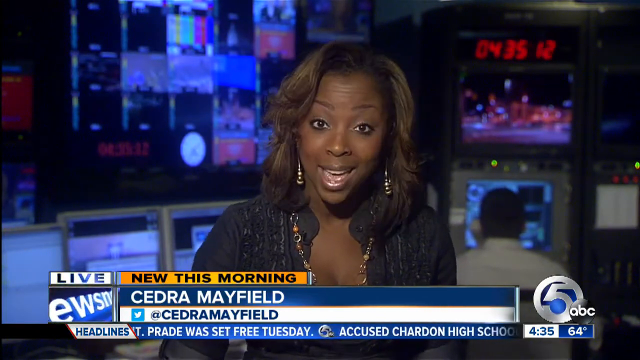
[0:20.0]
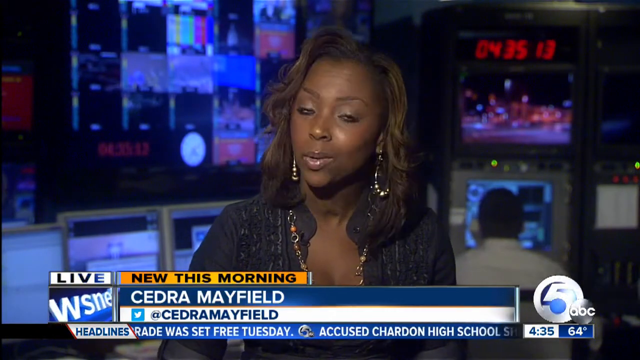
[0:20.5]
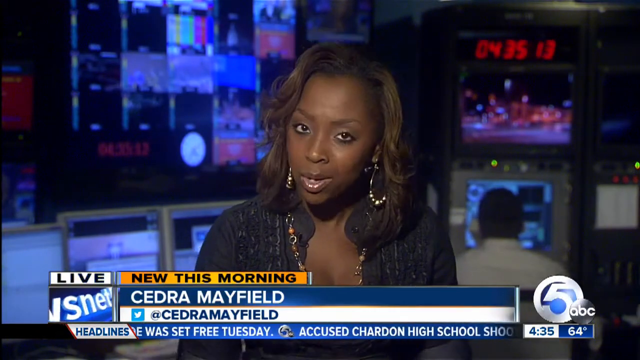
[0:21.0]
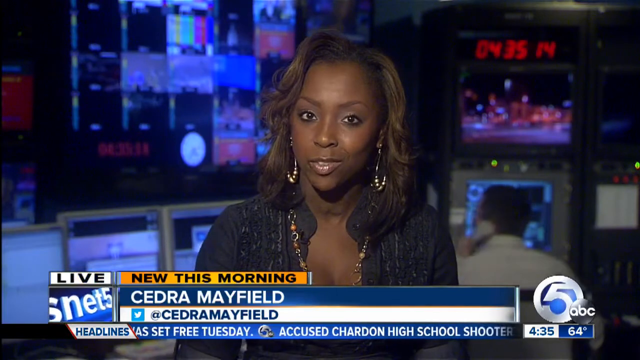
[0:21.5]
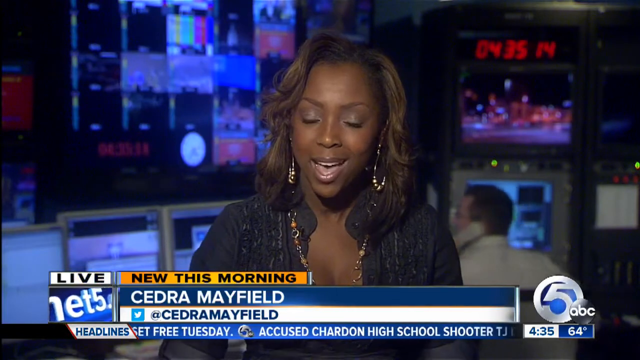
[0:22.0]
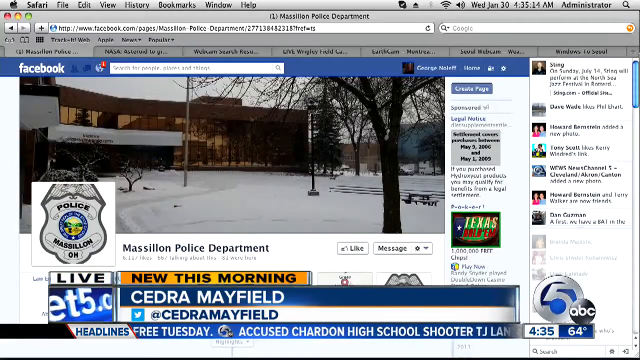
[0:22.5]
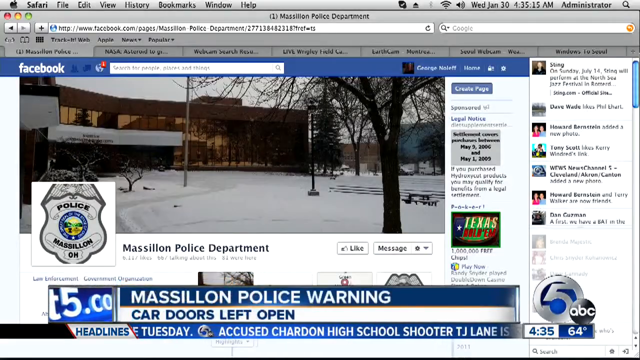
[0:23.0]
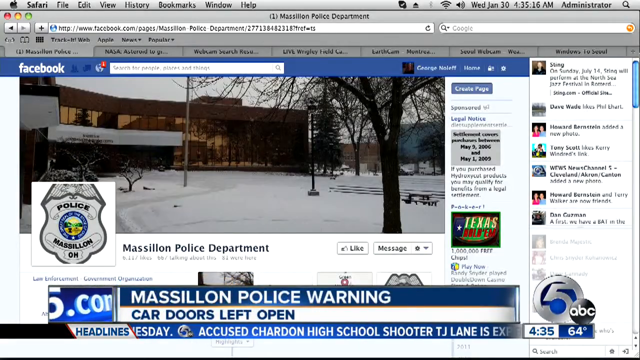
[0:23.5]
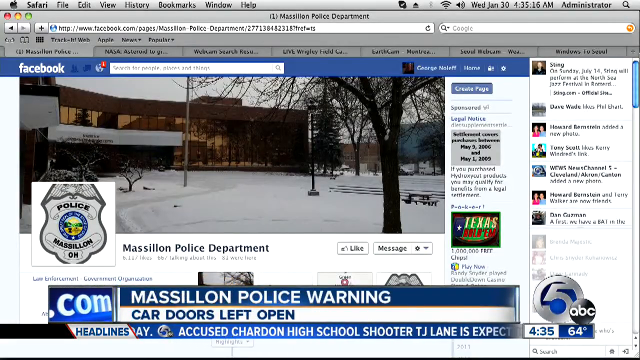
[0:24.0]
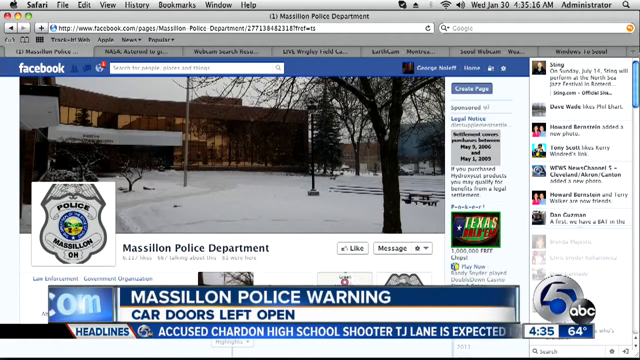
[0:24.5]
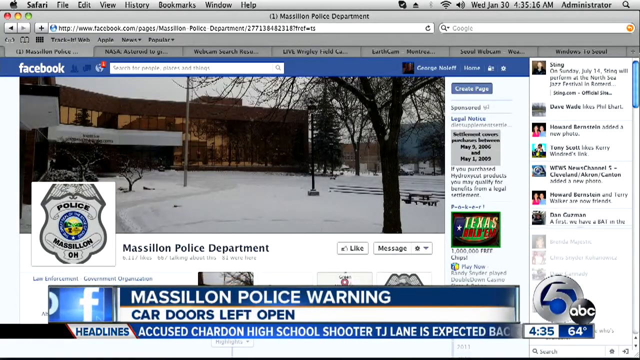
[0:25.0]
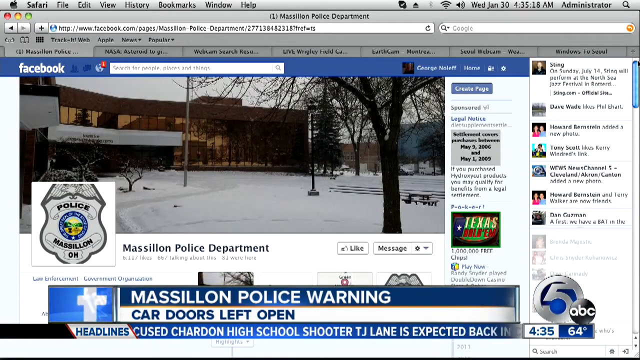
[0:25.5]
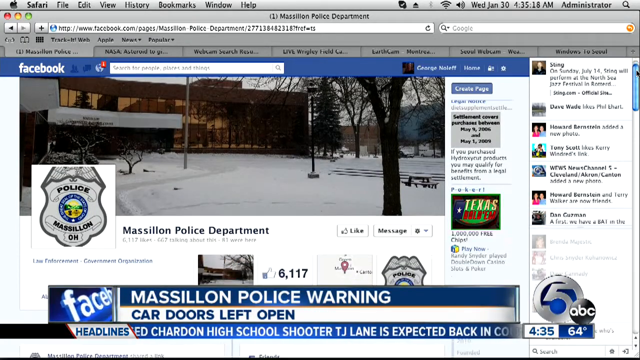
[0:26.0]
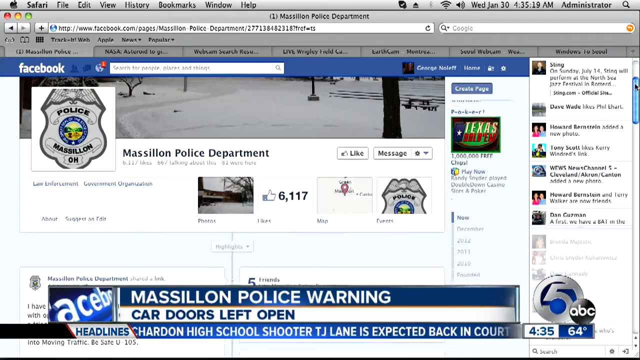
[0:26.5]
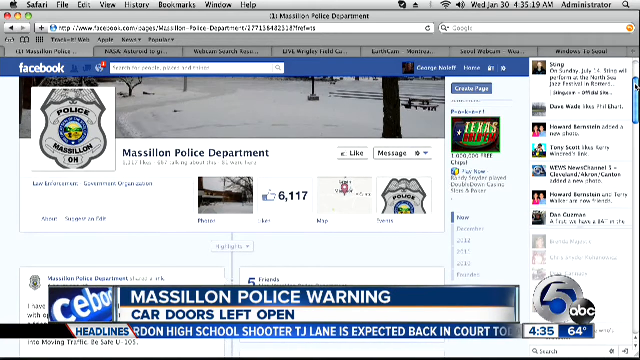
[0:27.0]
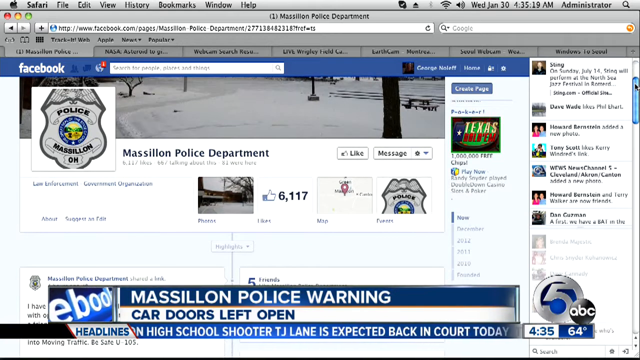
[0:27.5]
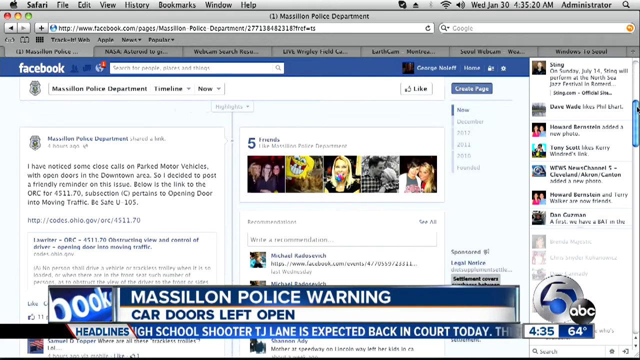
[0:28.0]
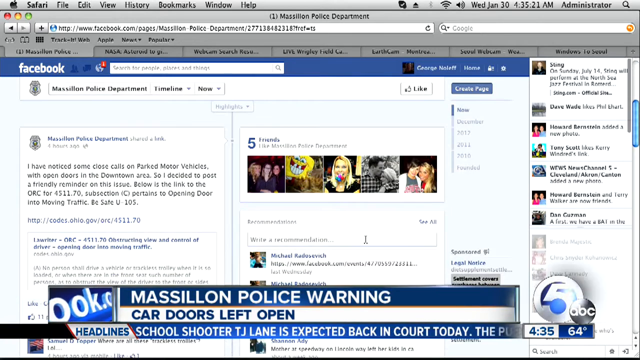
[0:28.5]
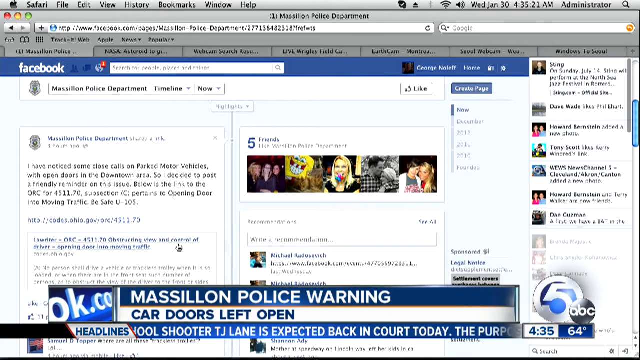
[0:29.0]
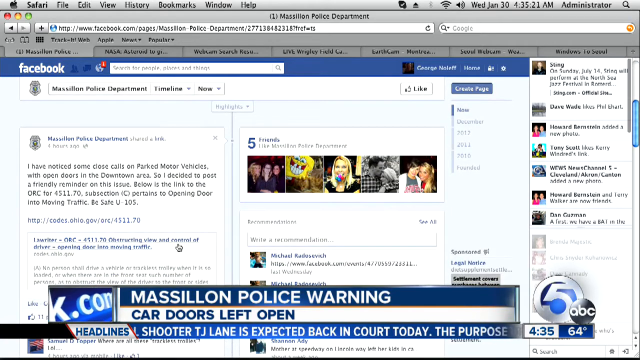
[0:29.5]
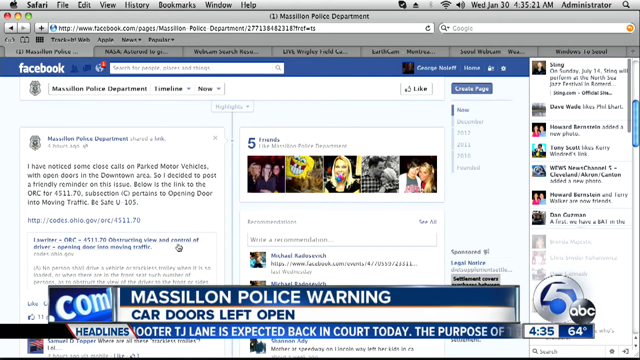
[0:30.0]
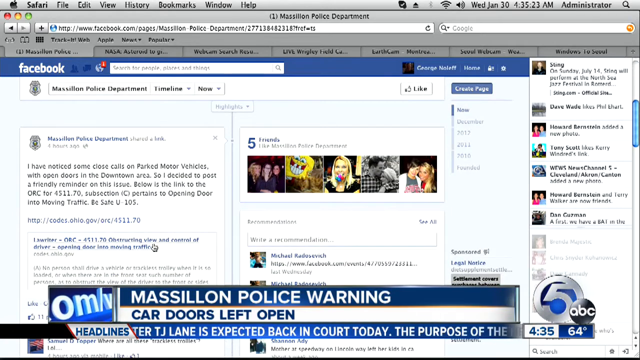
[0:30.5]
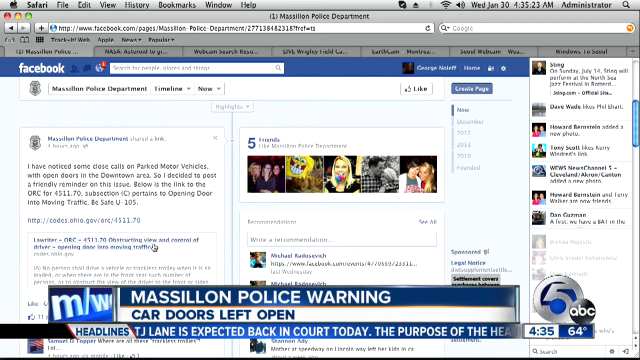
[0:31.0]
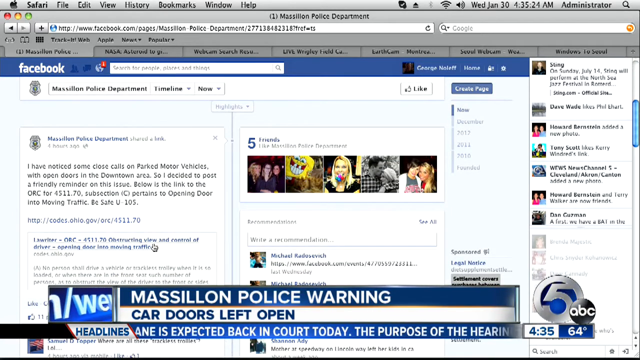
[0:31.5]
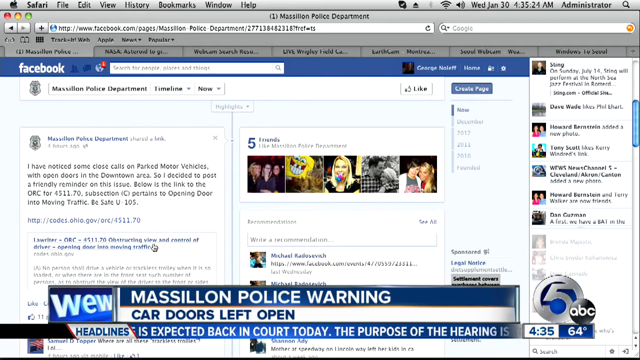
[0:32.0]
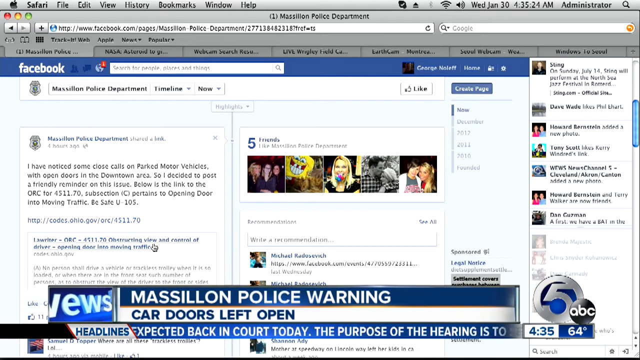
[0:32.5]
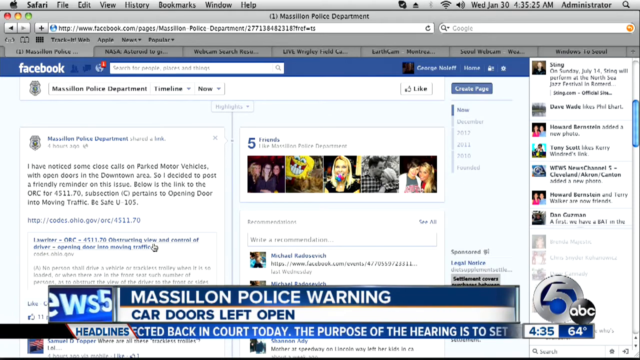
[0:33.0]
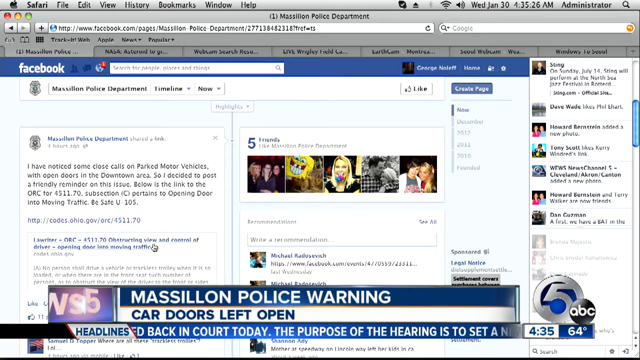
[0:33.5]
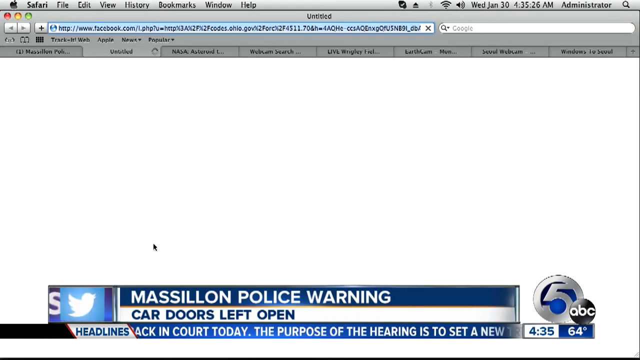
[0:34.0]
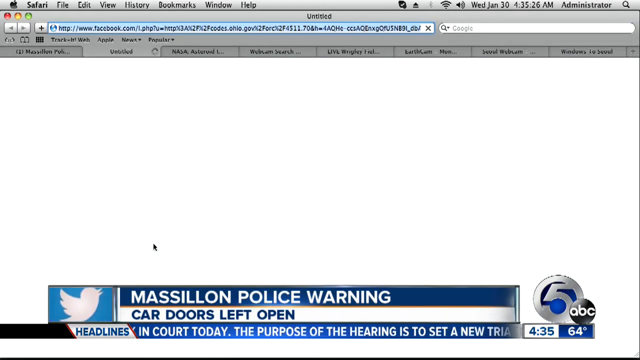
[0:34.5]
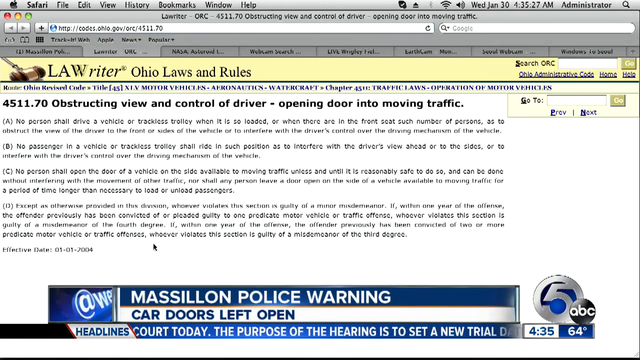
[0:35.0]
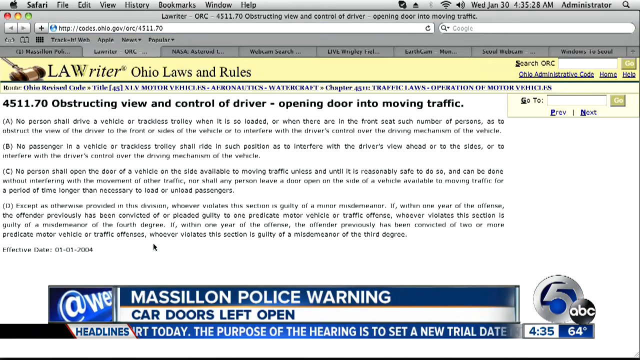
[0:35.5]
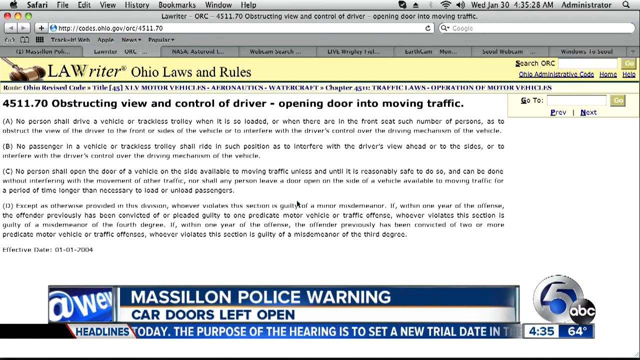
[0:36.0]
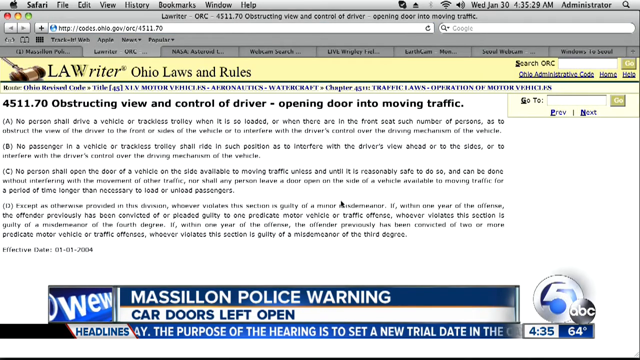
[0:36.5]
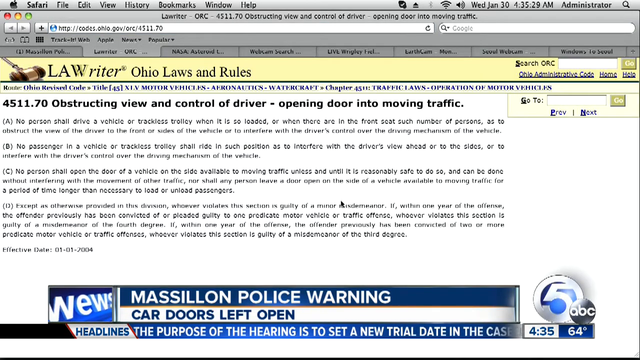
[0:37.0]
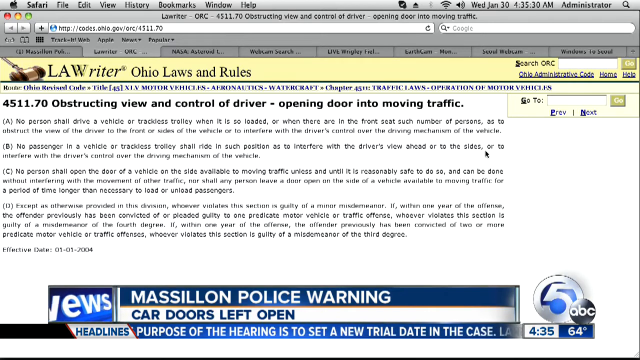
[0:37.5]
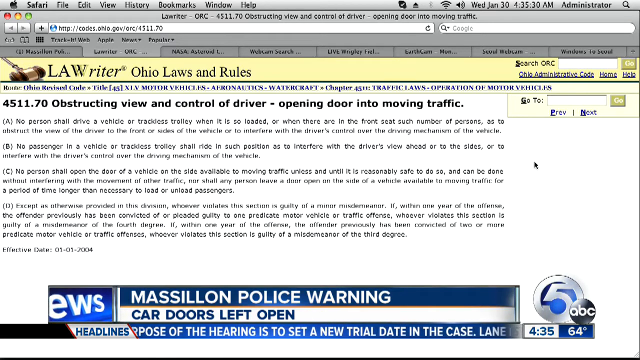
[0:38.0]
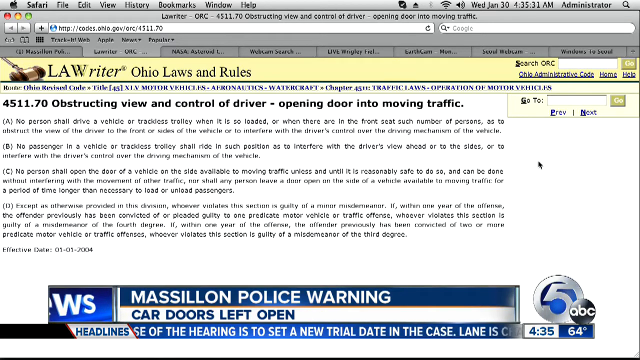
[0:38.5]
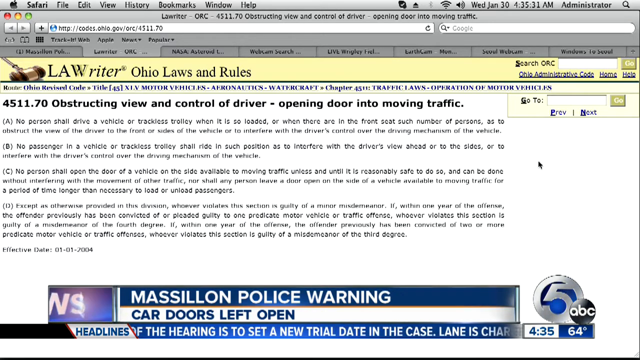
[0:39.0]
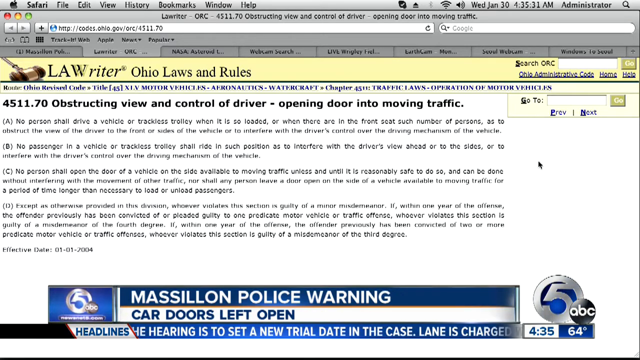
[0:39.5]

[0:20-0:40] Ms. Mayfield speaks for only about two to three seconds, and then the video cuts to the story she is possibly covering. A website with multiple tabs open is shown, with the Facebook tab for the Massillon Police Department displayed. A lower third at the very bottom of the screen reads "Massillon Police Warning" and "car doors left open", suggesting the story may be about car break-ins. The Facebook page is scrolled down. The video then moves to a specific law for Ohio, suggesting this is possibly an Ohio-based news network, and shows a basic explanation of the law before the scene quickly cuts.